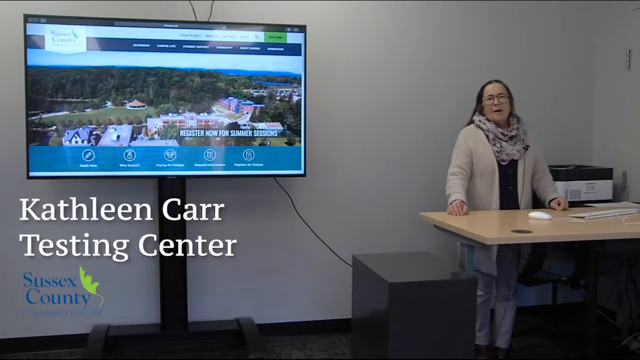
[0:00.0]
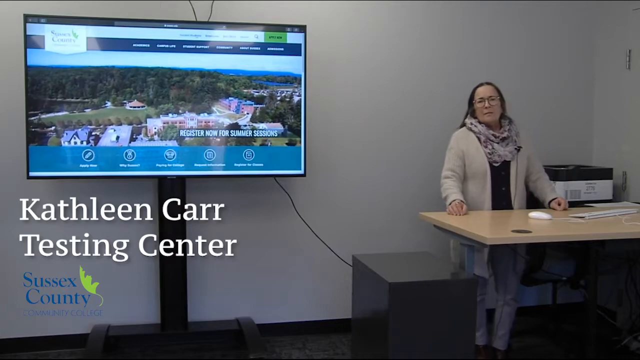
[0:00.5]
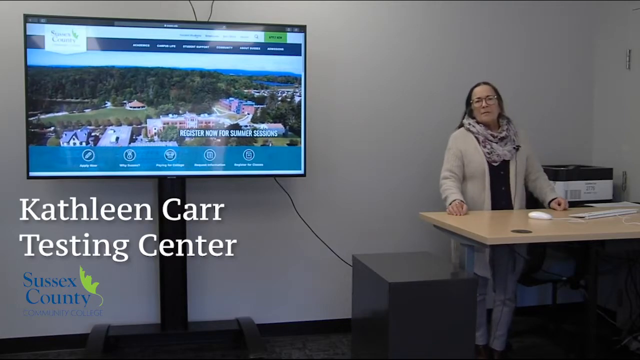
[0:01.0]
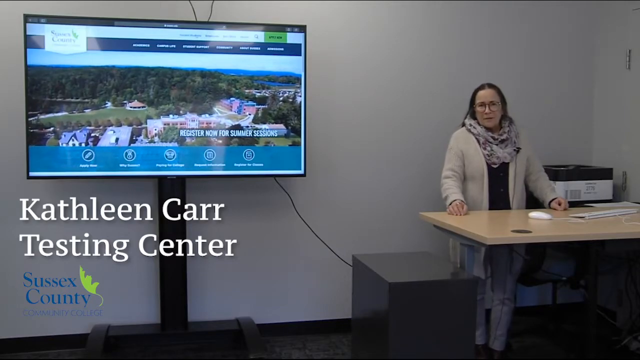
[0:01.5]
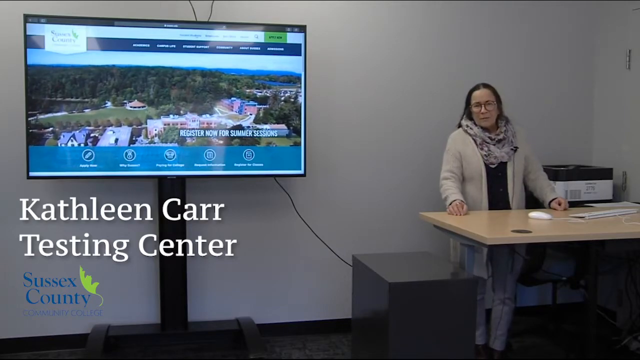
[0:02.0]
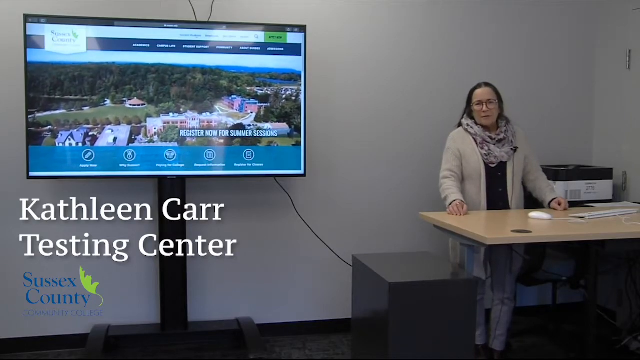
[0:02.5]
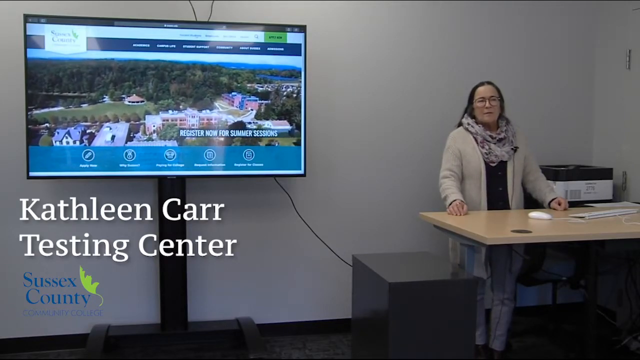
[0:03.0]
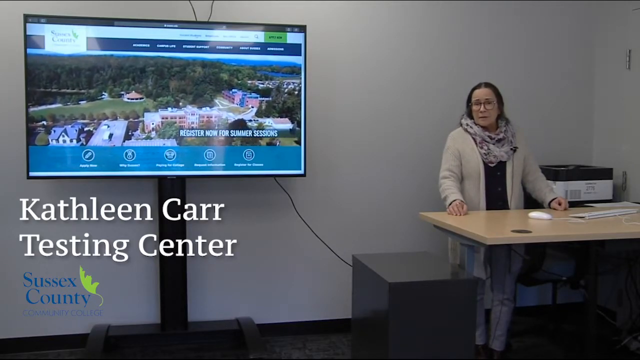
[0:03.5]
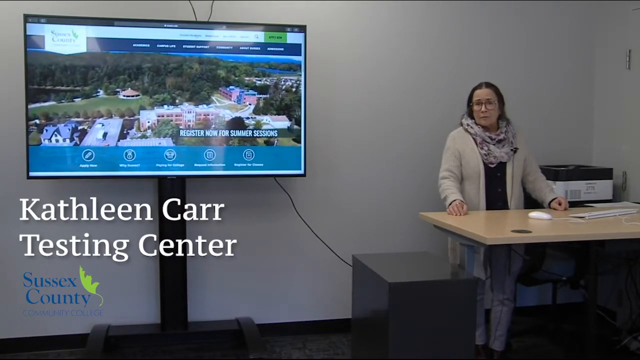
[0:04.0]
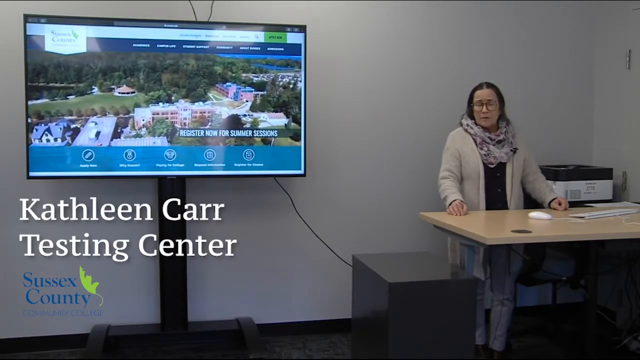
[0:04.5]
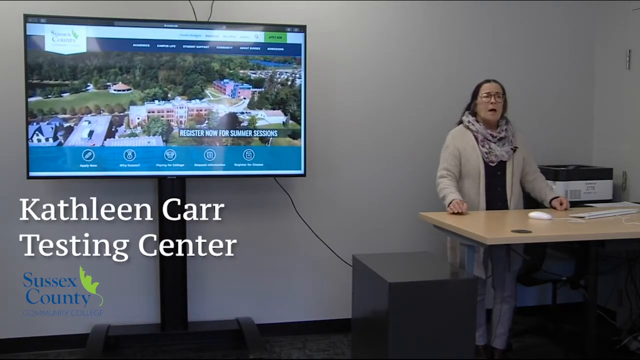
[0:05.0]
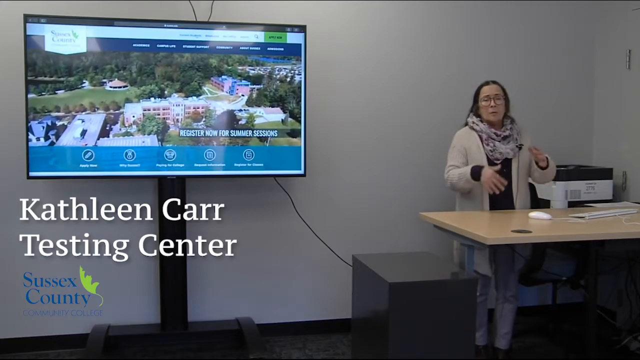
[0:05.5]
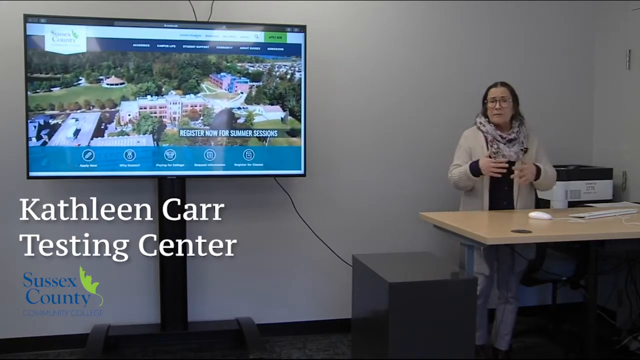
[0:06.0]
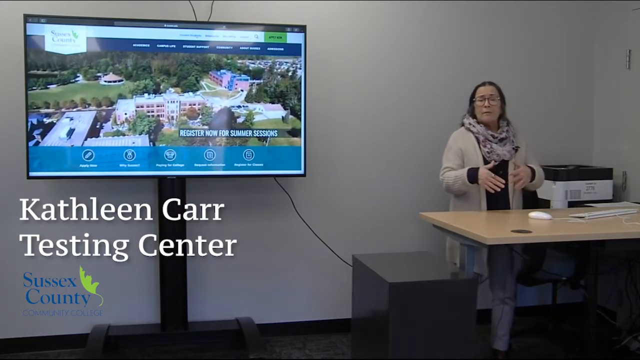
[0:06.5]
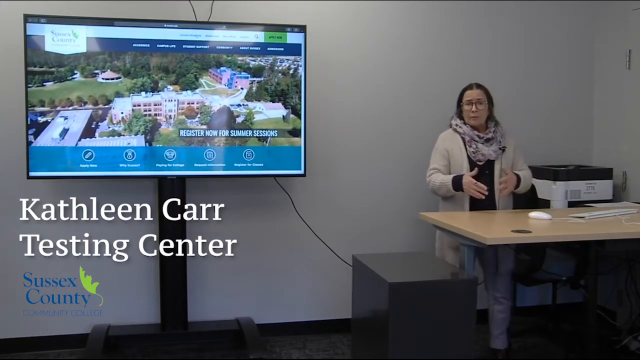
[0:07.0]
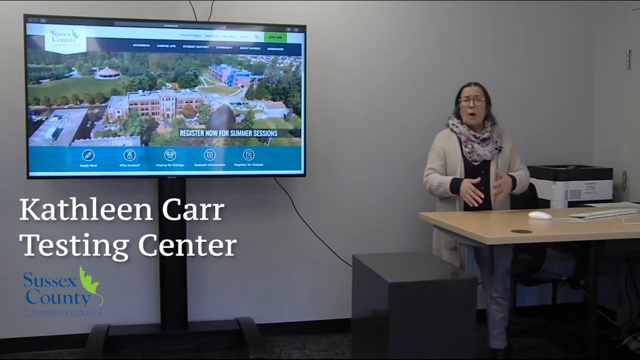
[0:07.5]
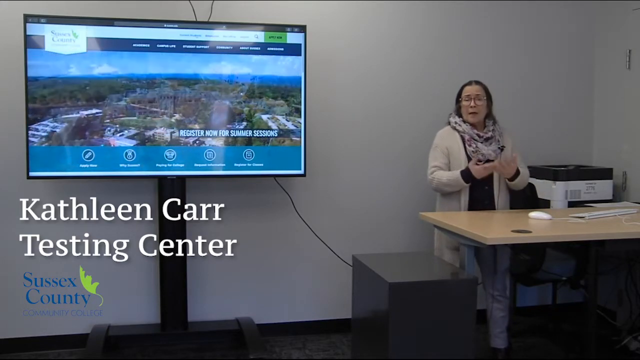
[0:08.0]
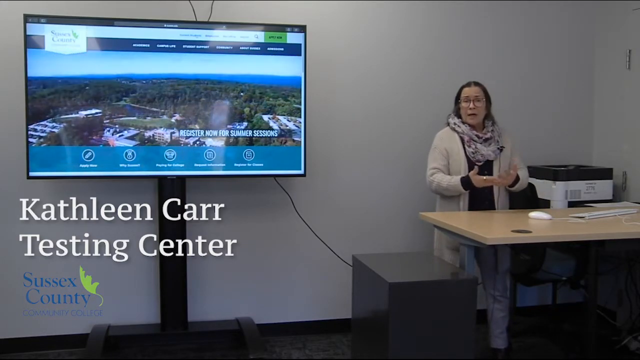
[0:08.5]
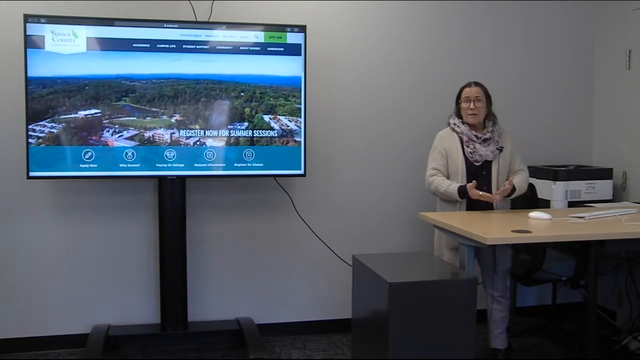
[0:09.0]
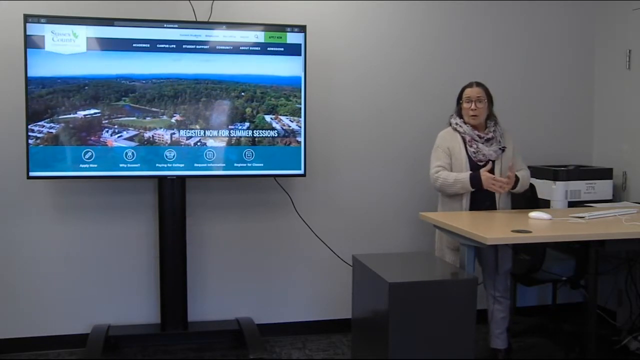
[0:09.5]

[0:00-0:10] Kathleen Carr, who works at some kind of testing center at Sussex County Community College, stands in a classroom on the right side of the scene. On the projector screen behind her is the main site of Sussex County Community College. She wears a gray scarf with some kind of flower pattern on it, some kind of button-up sweater worn open, blue jeans and glasses. She stands by a table on which there is a white mouse. Behind her there are some kind of books, or possibly a printer, or maybe a scanner for documents.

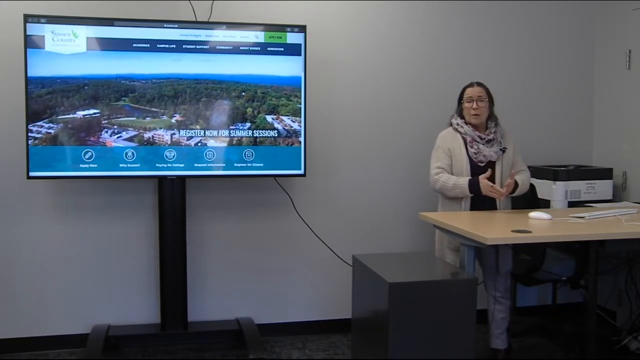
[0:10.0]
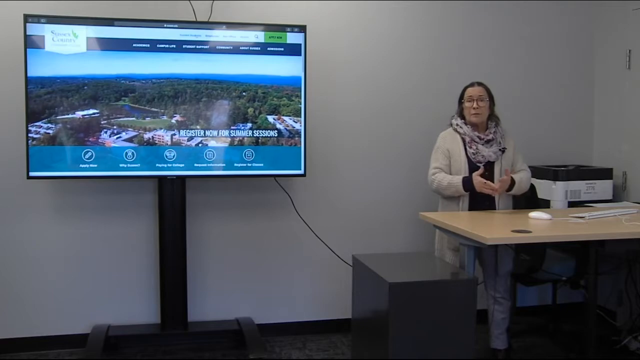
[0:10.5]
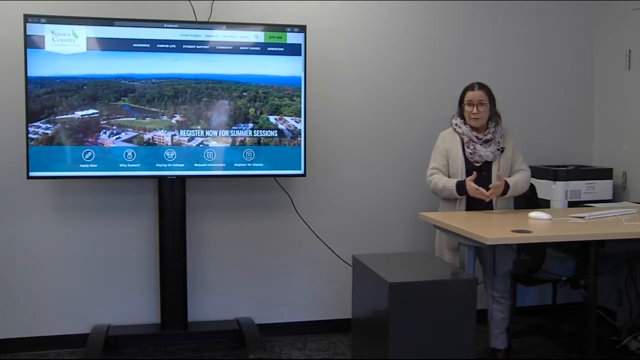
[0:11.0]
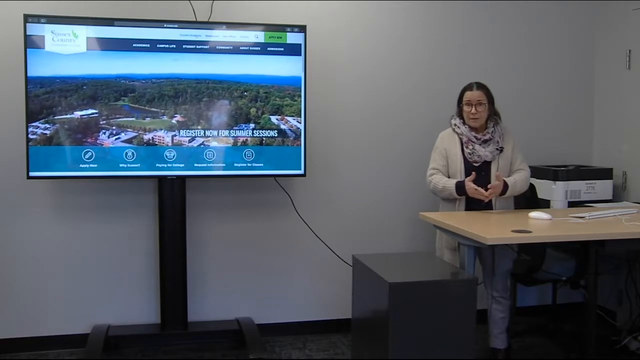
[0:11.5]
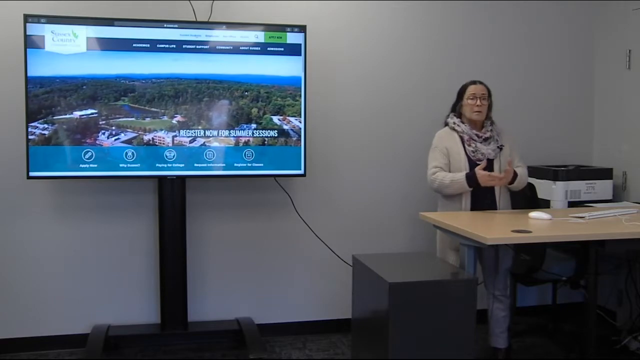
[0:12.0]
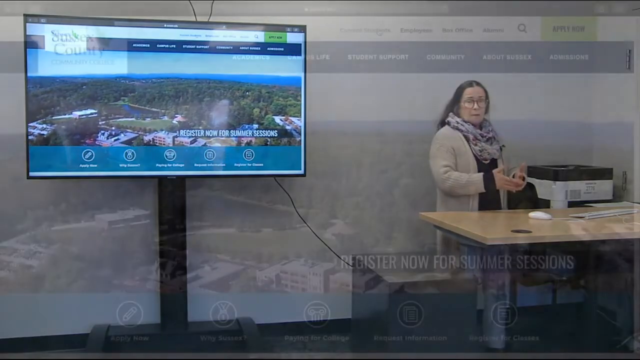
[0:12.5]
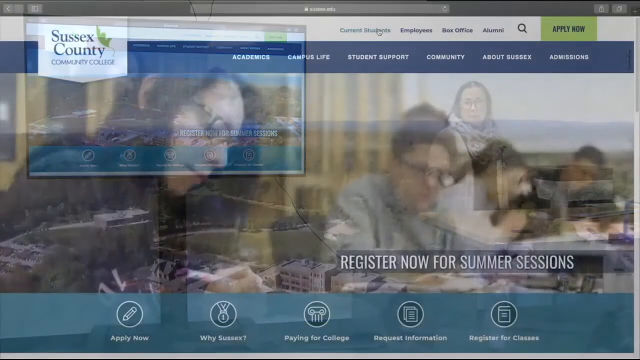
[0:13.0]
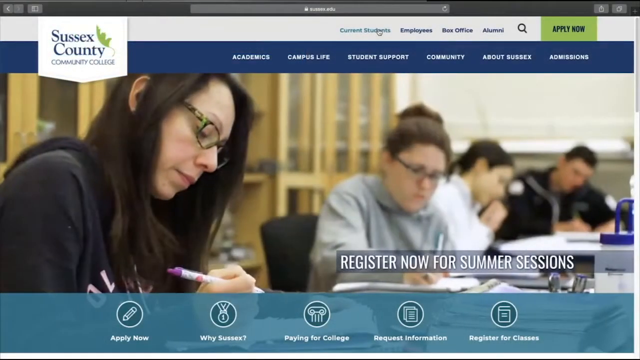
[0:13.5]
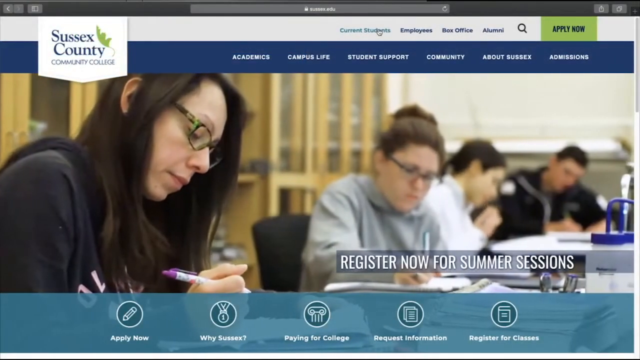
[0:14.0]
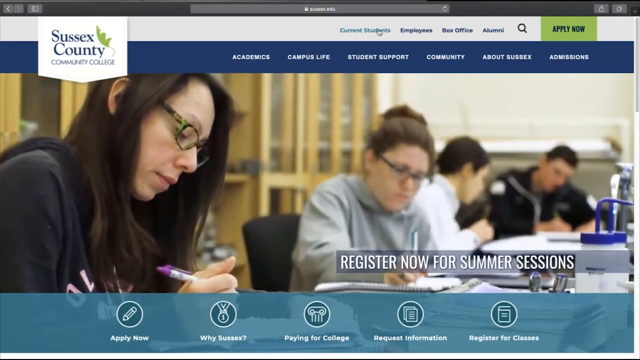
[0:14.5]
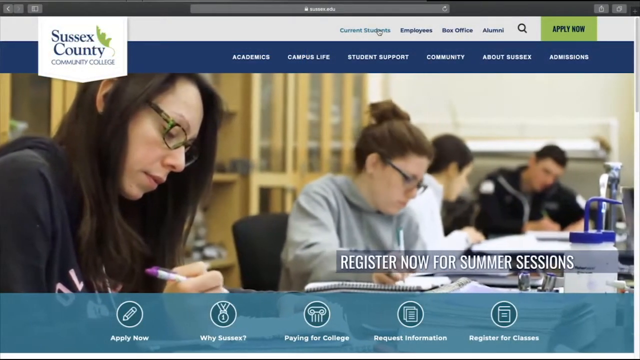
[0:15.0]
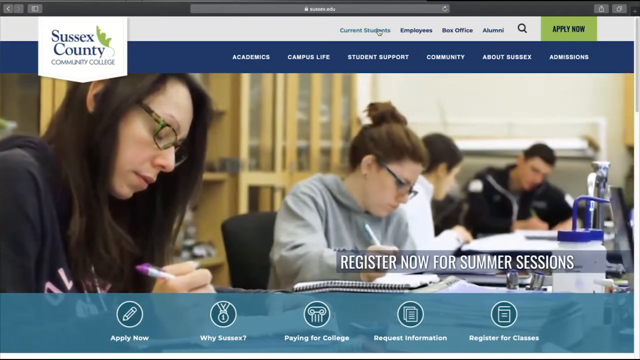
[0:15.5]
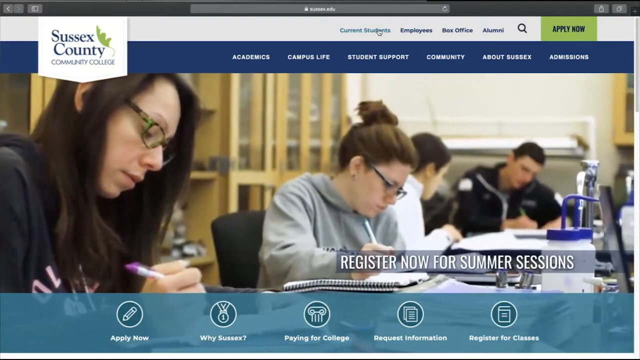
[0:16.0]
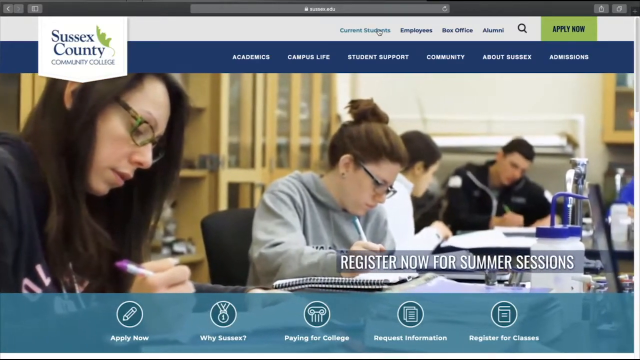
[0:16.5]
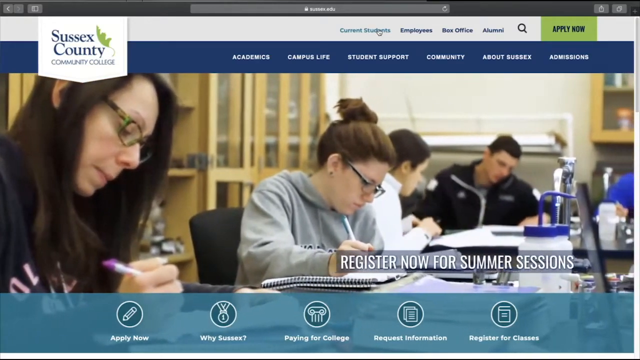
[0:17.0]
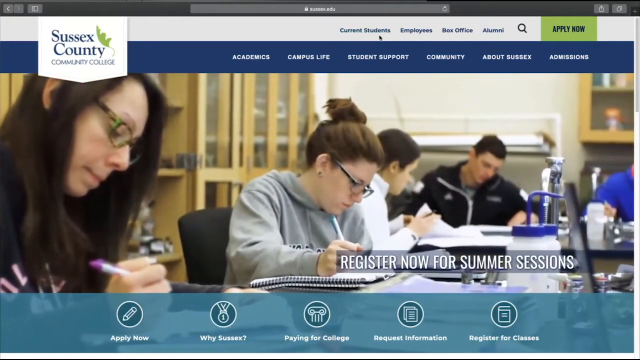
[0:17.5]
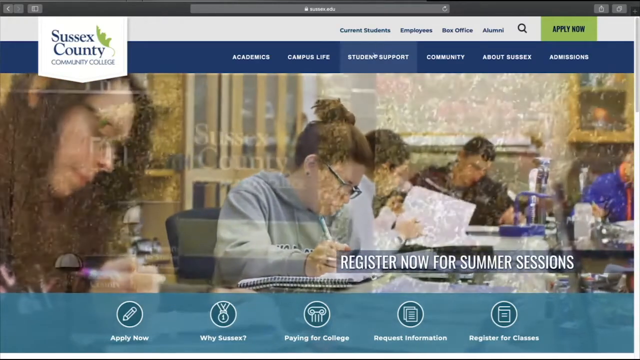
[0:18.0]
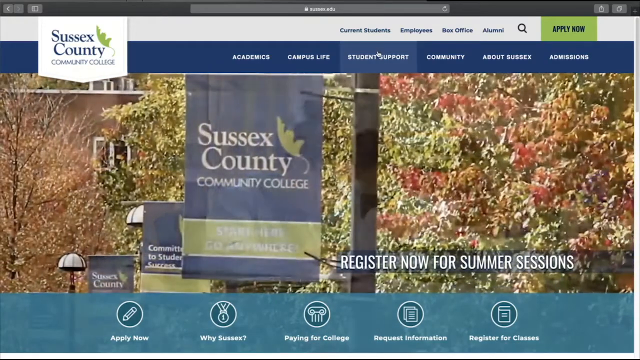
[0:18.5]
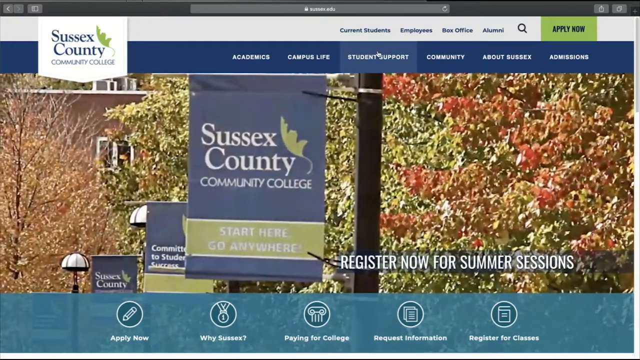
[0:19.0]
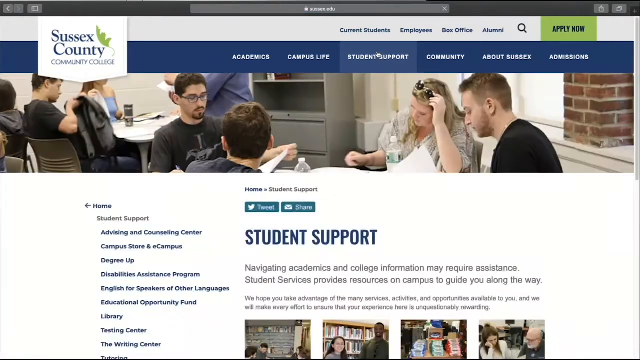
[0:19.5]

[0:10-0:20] A woman who looks somewhat like a college teacher, probably a professor, wears a scarf, a sweater with a black t-shirt underneath, jeans and glasses. She stands by a table with a mouse on it. Behind her is some kind of box, or maybe a printer or even a scanner. To her left is a screen, or maybe a TV, showing the main page of what appears to be a community college; the only clearly visible text reads "register now for summer session". The view then cuts to the page itself: the main page of Sussex County Community College, with an invitation to register for summer sessions. The cursor clicks on the student support page.